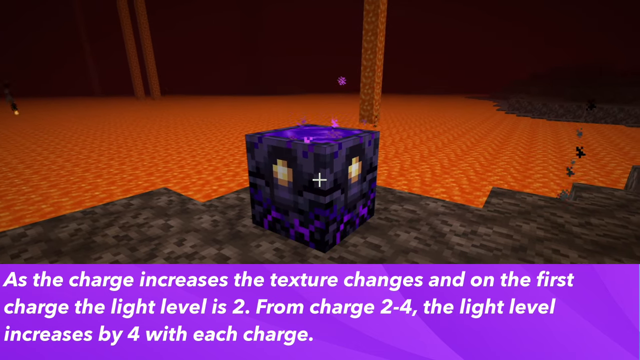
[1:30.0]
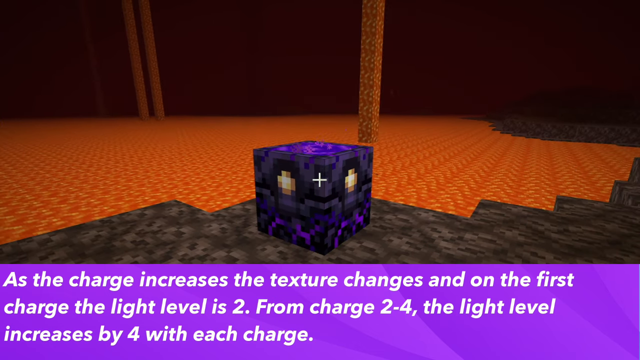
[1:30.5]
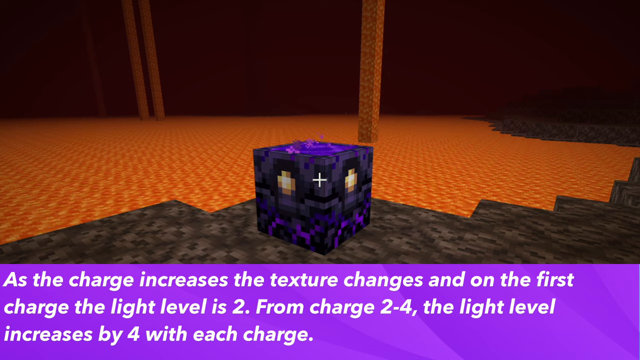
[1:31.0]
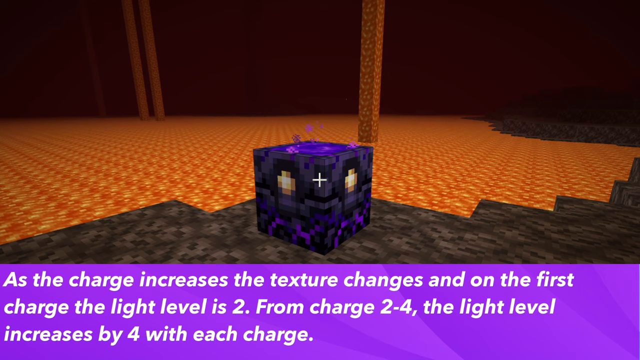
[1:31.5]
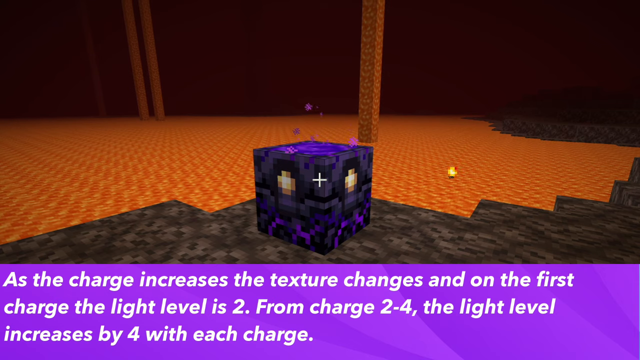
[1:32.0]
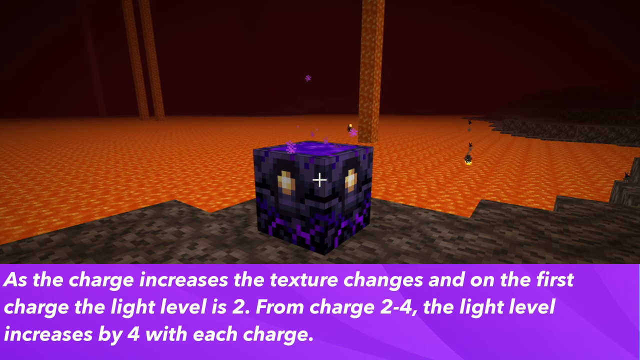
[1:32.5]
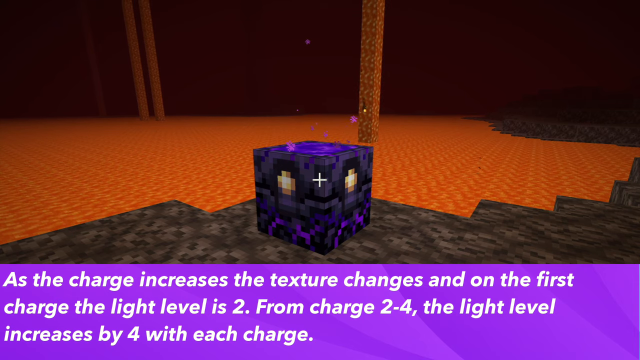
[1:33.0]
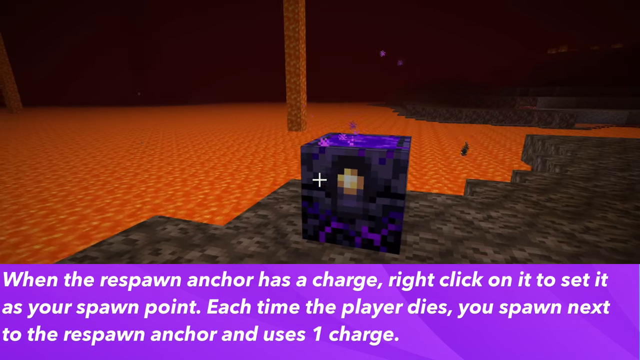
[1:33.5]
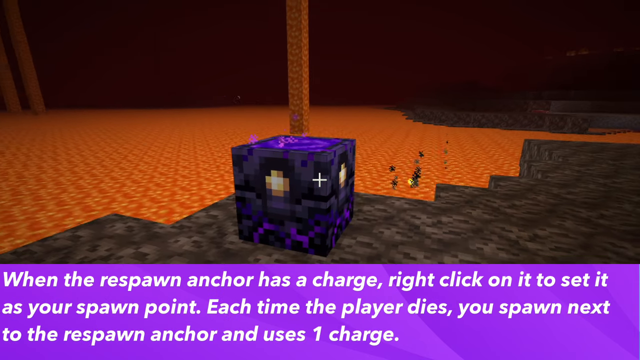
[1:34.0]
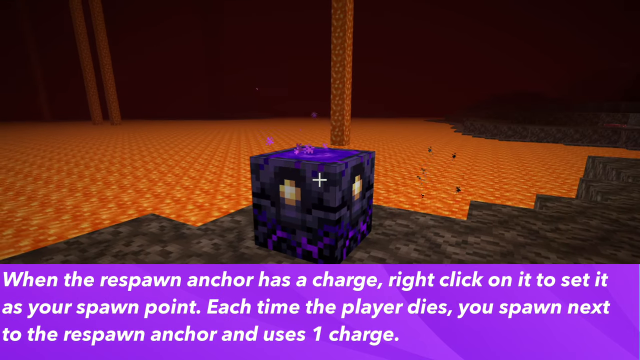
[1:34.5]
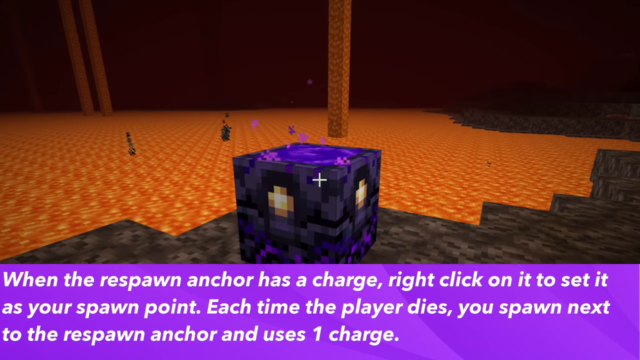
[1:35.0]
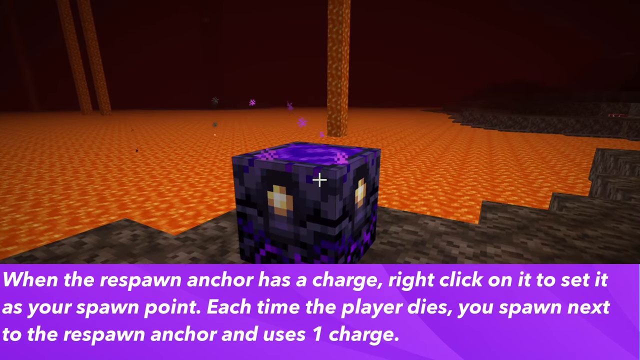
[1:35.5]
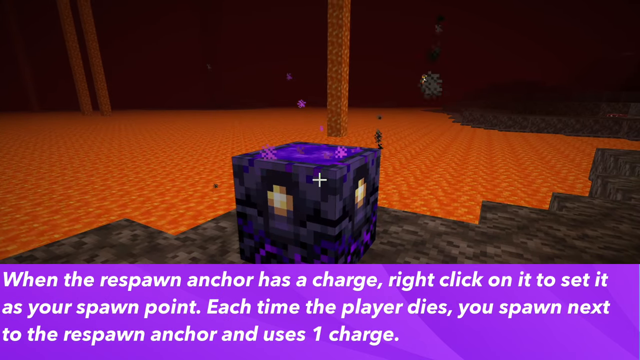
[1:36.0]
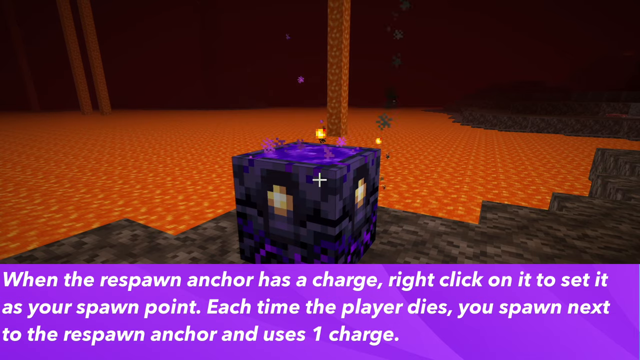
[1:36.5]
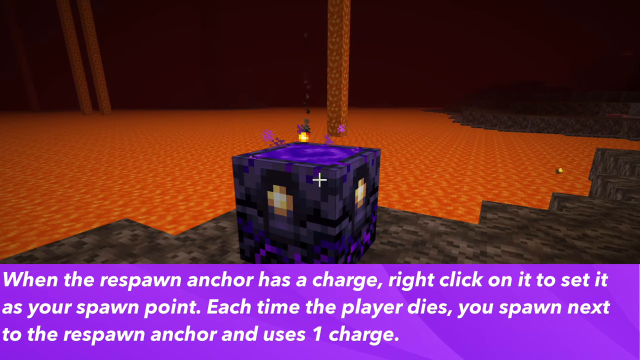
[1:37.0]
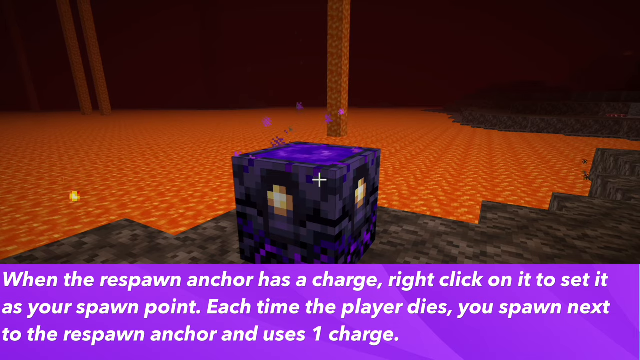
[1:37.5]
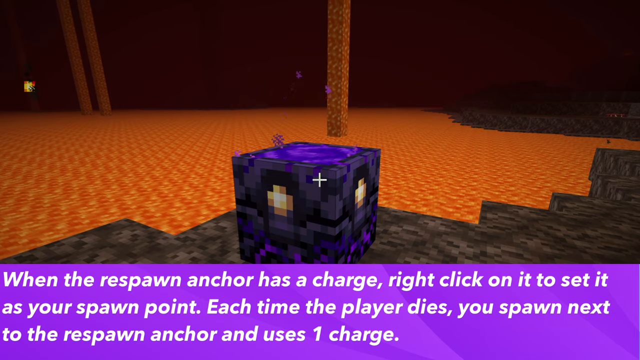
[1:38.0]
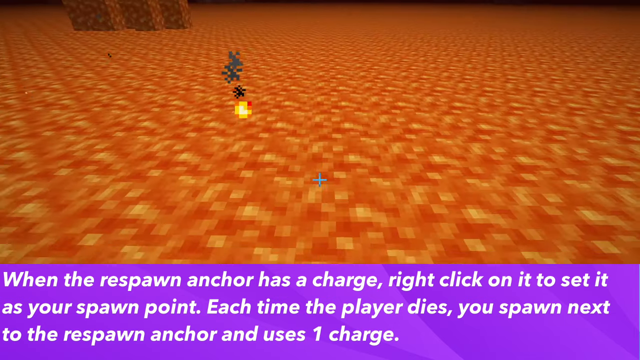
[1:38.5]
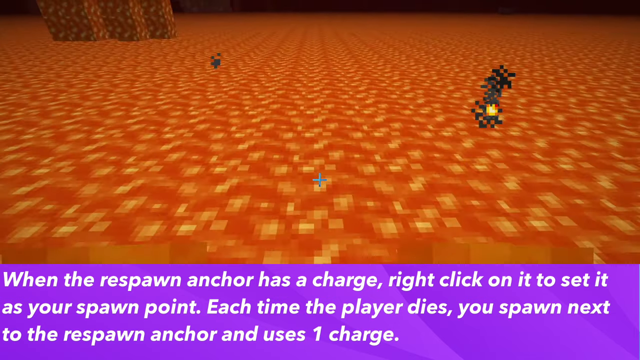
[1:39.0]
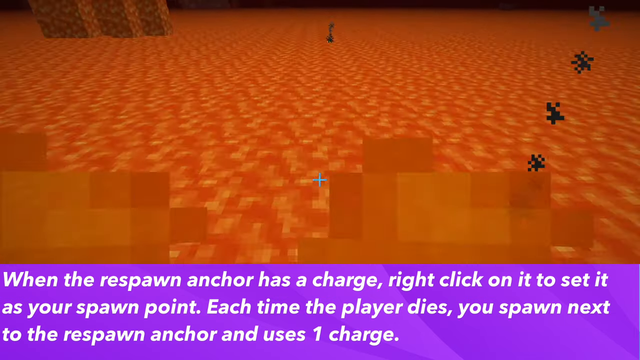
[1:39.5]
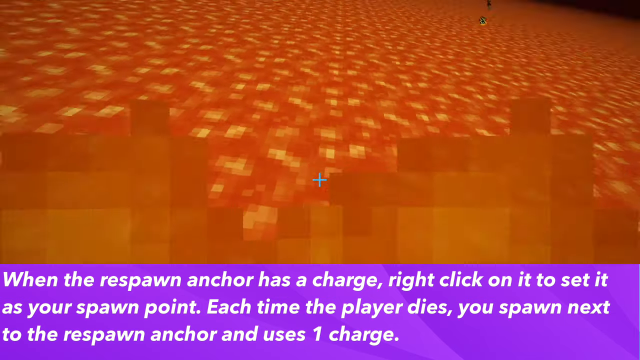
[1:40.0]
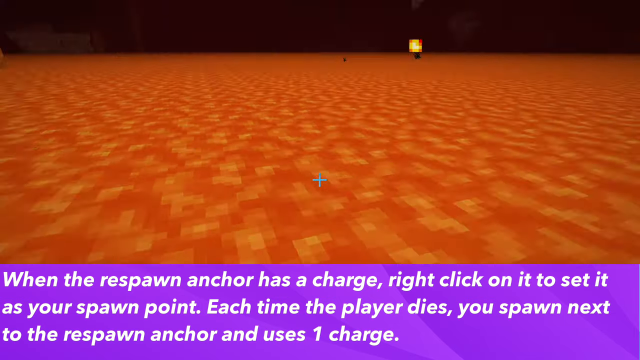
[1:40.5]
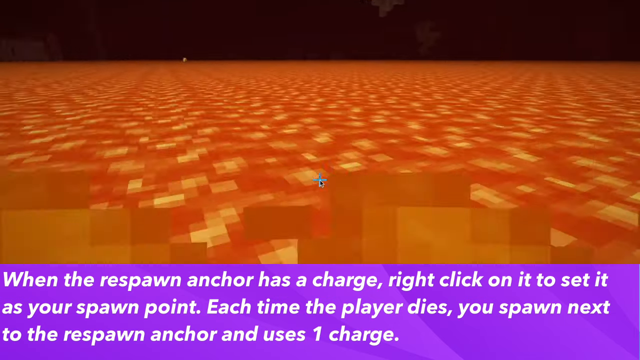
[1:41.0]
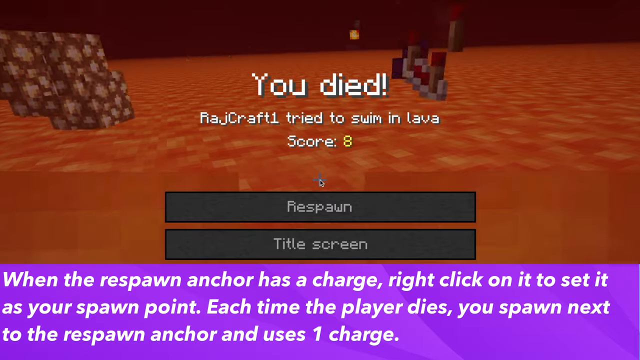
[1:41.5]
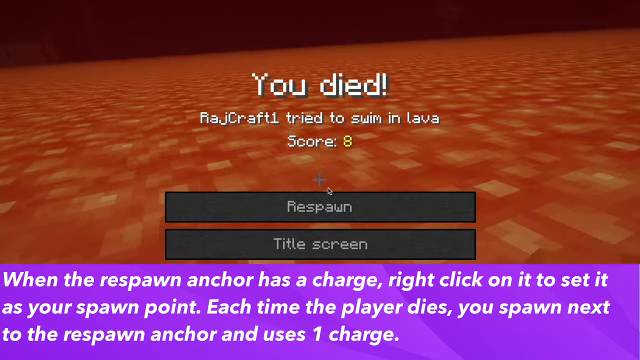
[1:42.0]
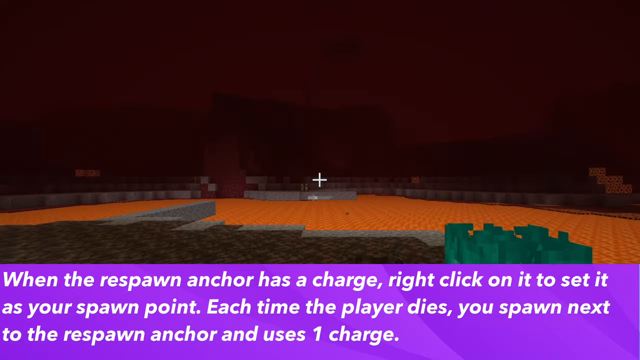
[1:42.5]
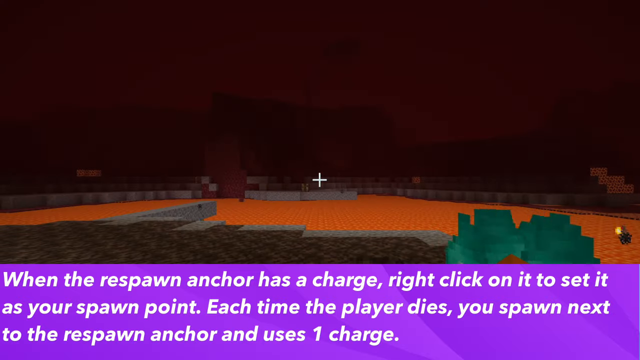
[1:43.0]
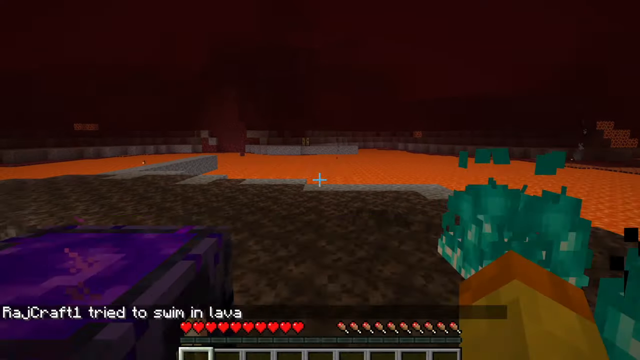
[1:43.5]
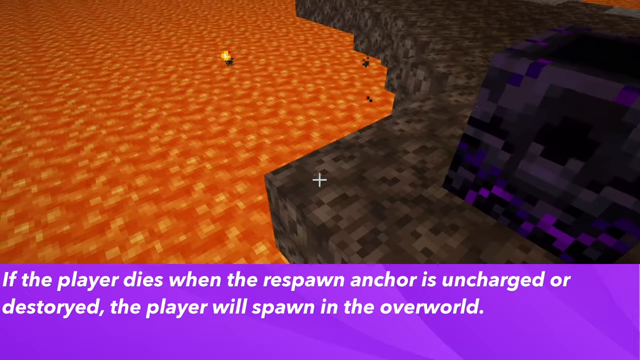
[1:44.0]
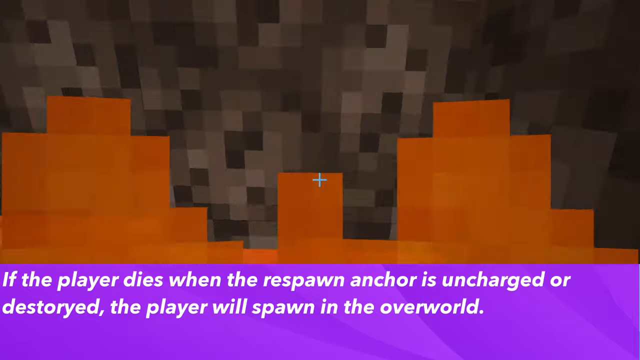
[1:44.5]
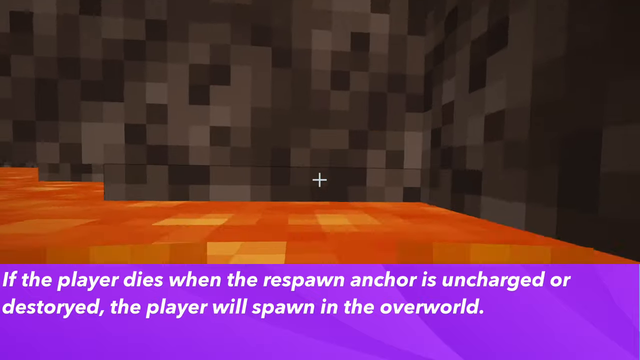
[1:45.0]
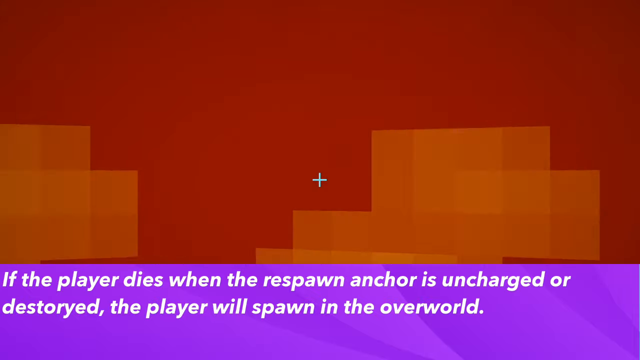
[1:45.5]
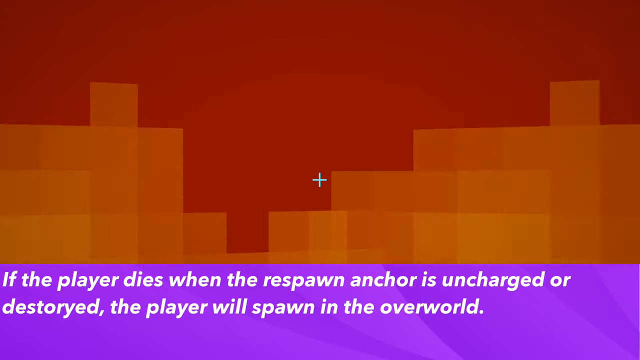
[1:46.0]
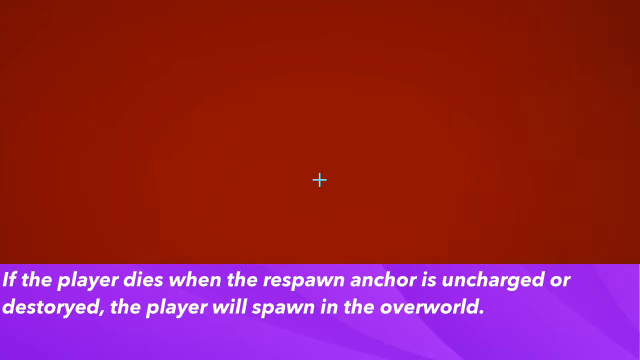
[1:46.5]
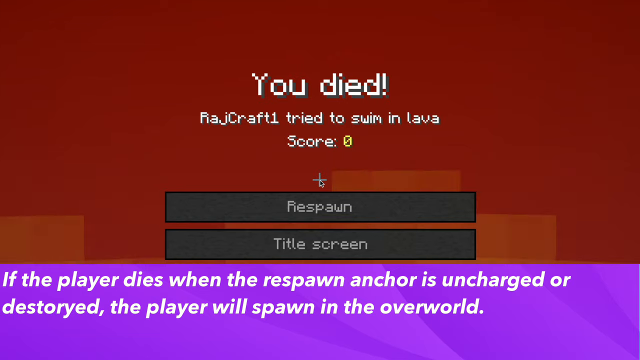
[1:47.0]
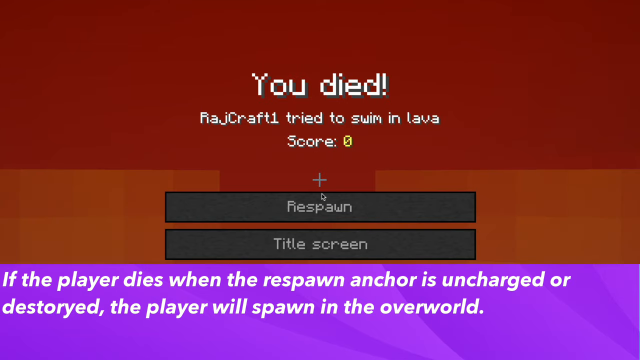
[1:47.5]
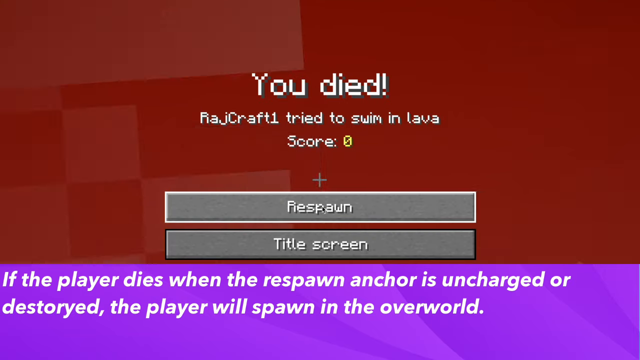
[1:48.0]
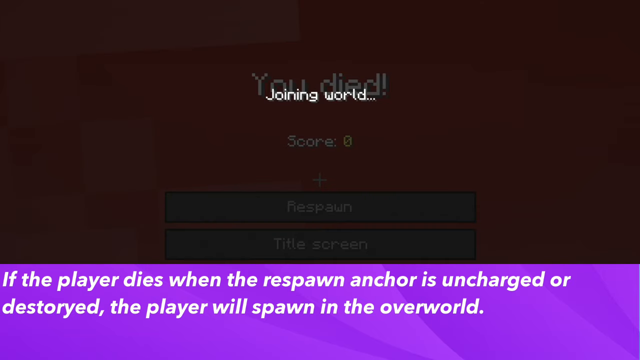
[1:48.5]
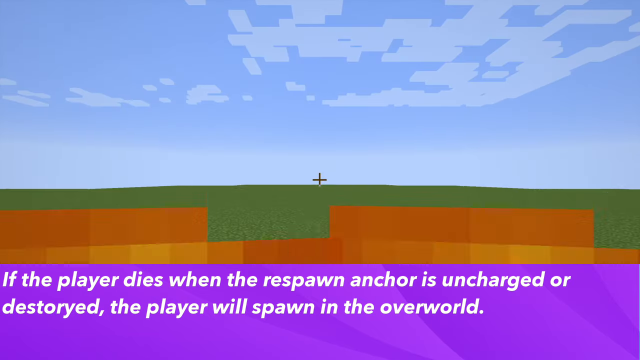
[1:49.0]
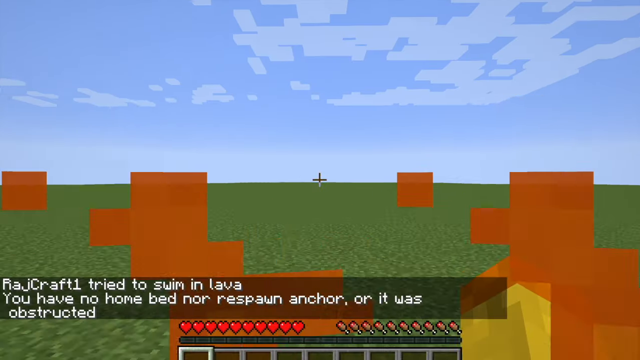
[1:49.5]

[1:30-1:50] On-screen text reads "as the charge increases, the texture changes" and "When the respawn anchor has a charge, right-click on it to set it as your spawn point. Each time the player dies, you're spawned next to the respawn anchor and use one charge." So far the game takes place only in one room and one pasture. The word "Rajcraft" appears on screen, and the game could be Minecraft.